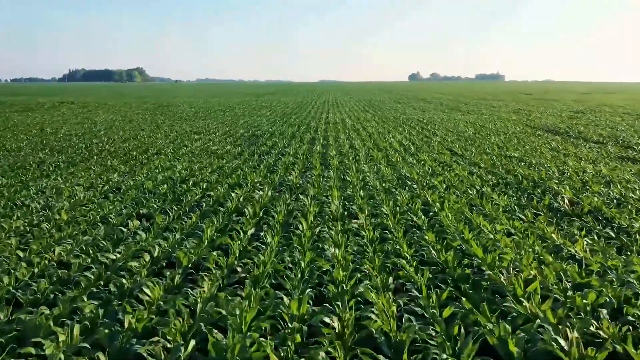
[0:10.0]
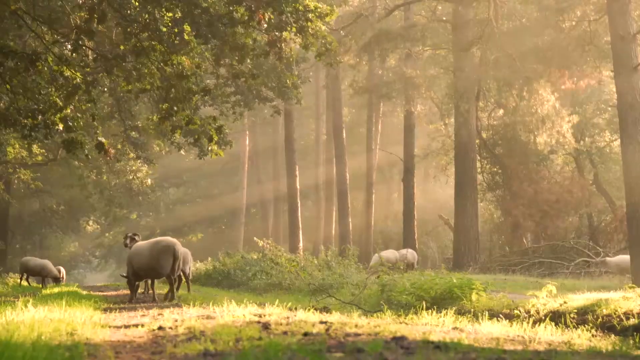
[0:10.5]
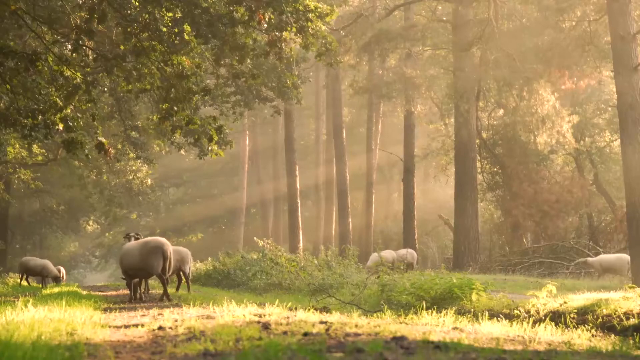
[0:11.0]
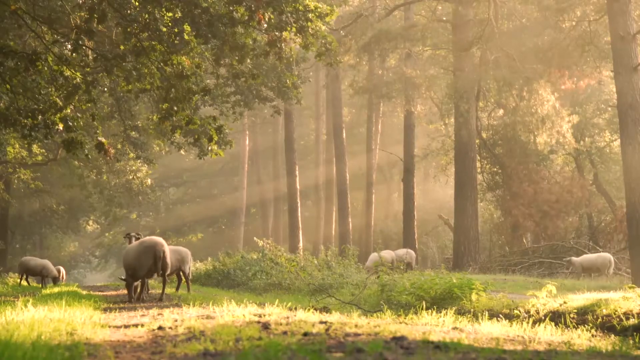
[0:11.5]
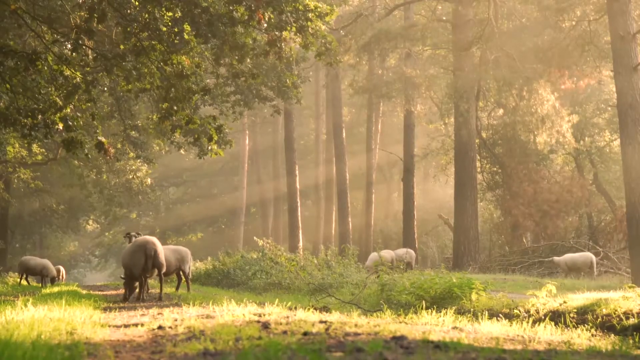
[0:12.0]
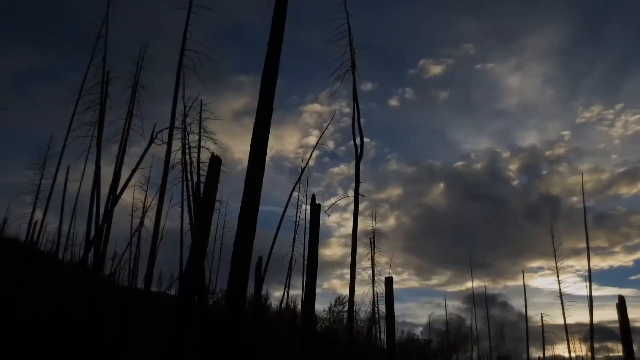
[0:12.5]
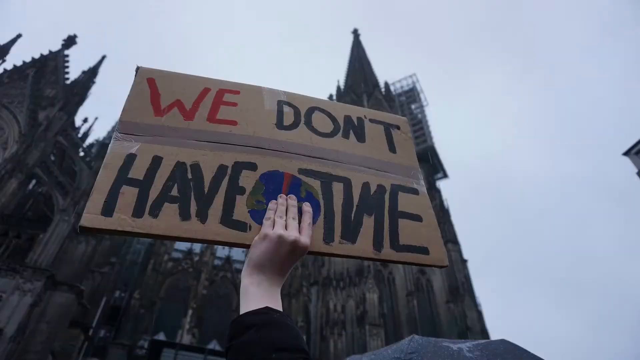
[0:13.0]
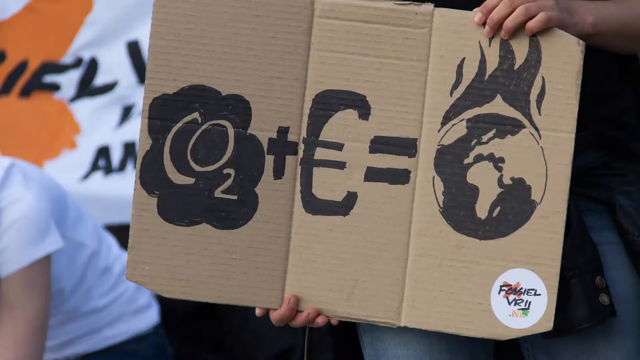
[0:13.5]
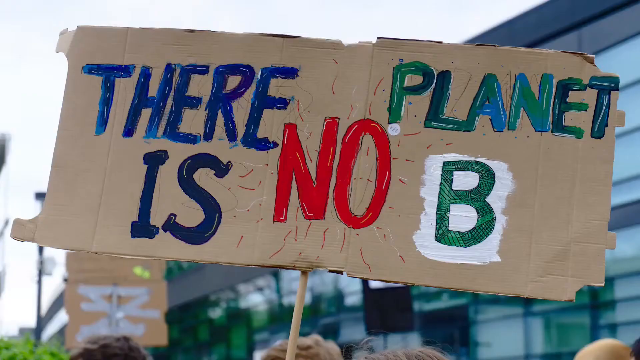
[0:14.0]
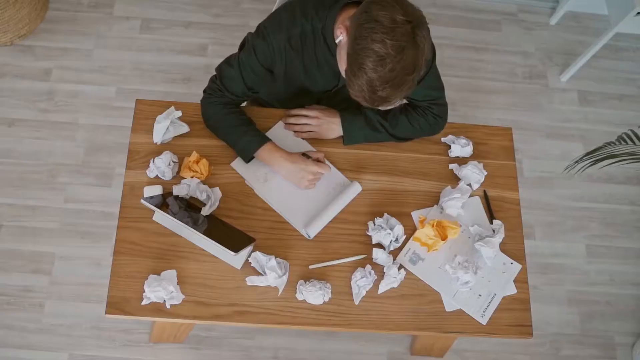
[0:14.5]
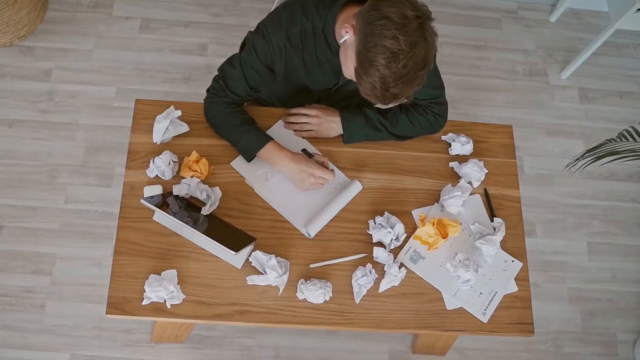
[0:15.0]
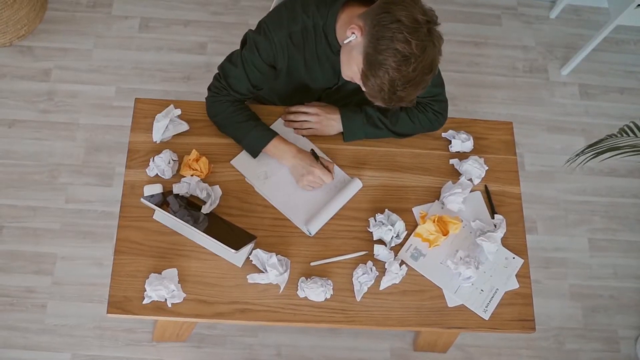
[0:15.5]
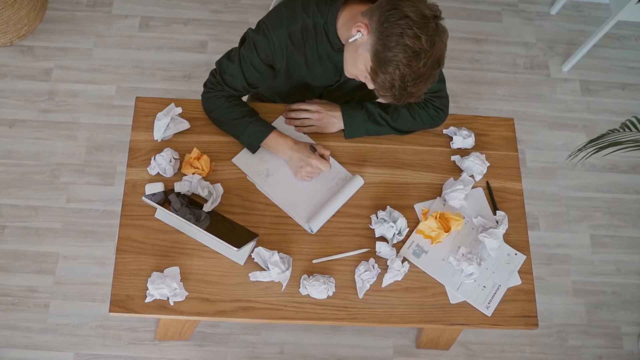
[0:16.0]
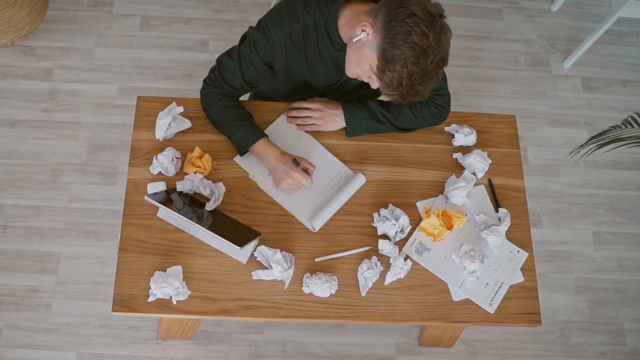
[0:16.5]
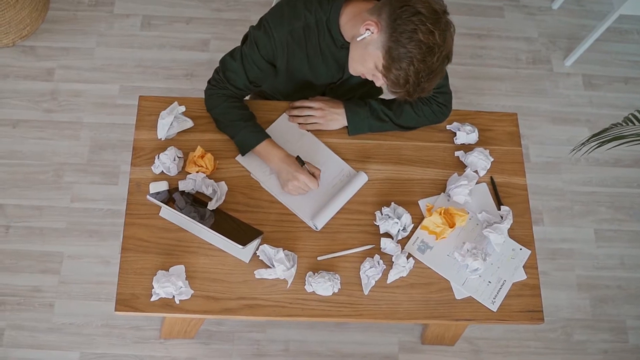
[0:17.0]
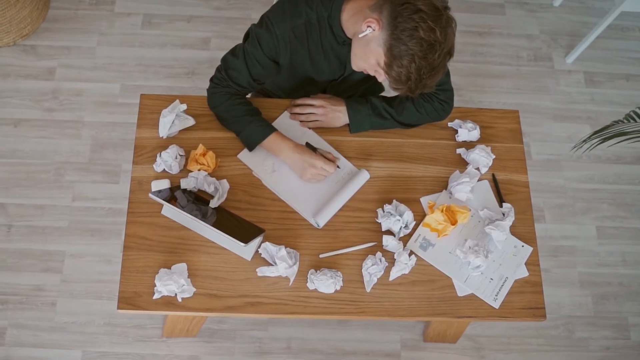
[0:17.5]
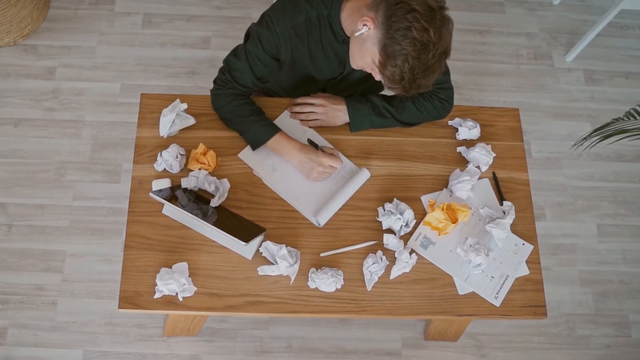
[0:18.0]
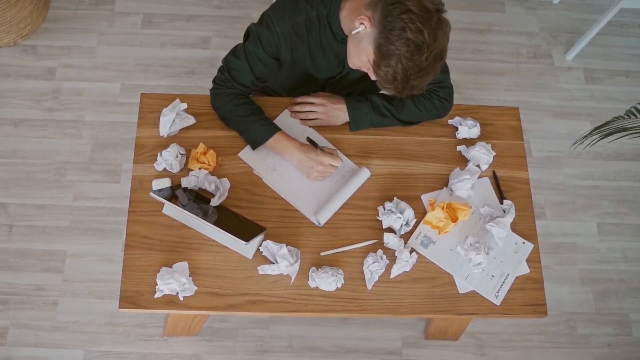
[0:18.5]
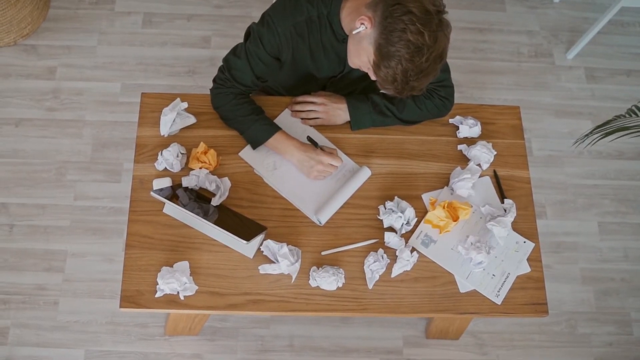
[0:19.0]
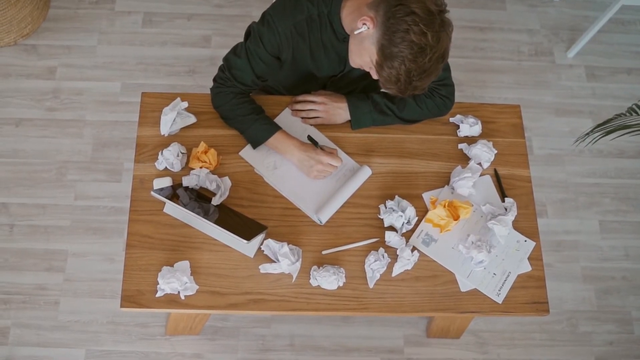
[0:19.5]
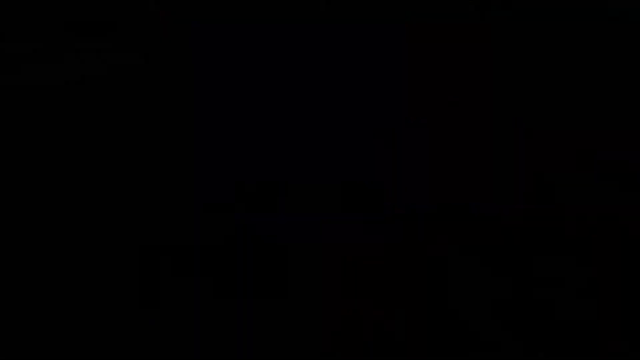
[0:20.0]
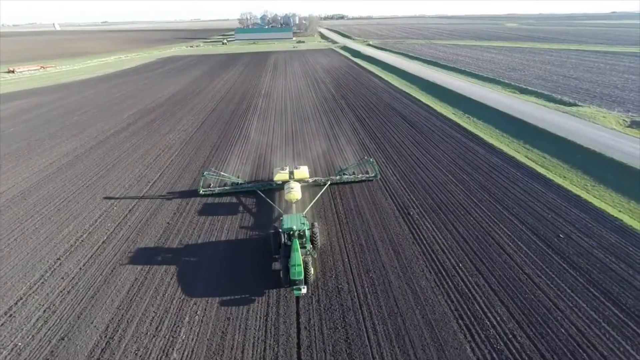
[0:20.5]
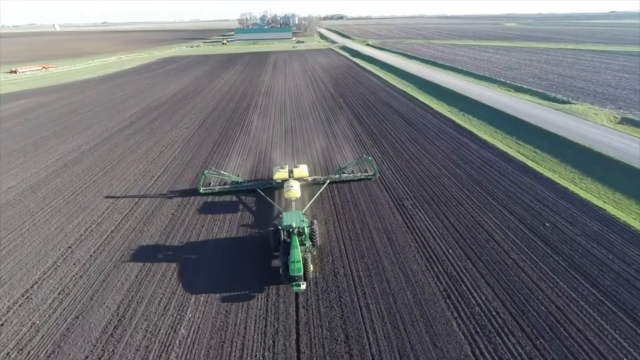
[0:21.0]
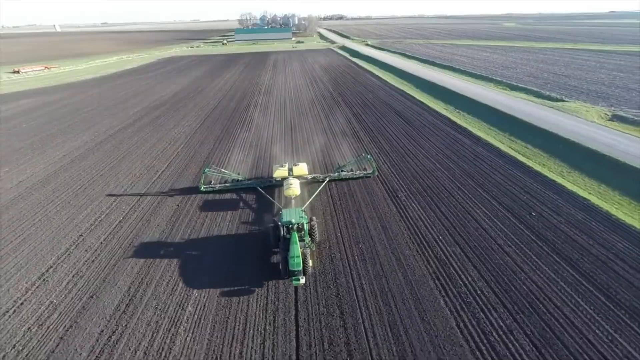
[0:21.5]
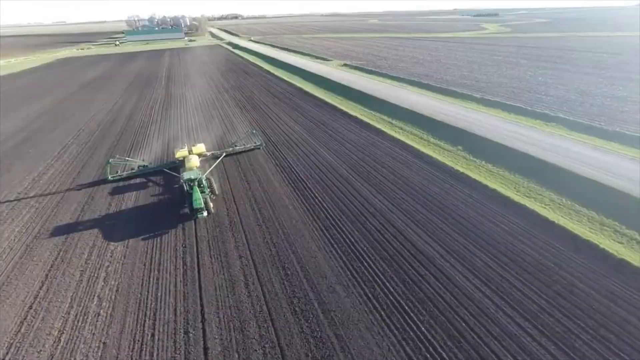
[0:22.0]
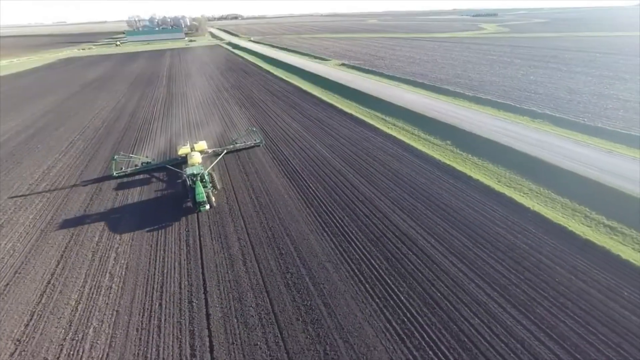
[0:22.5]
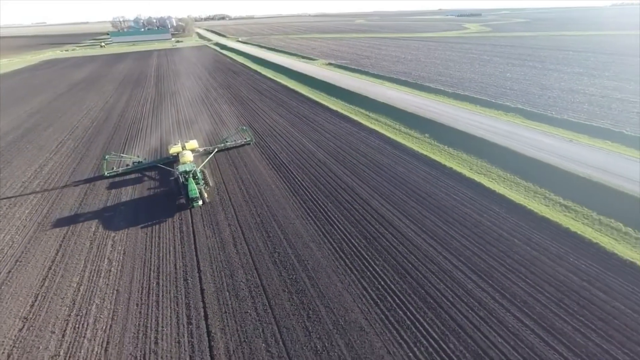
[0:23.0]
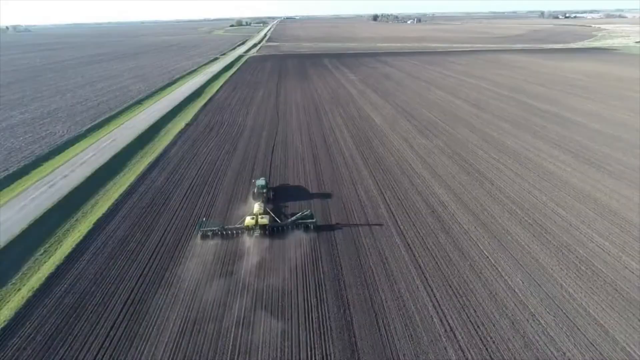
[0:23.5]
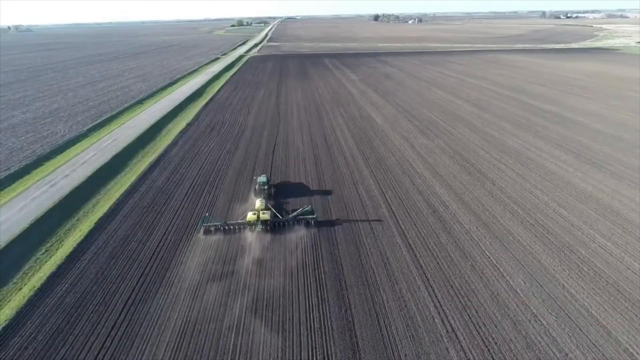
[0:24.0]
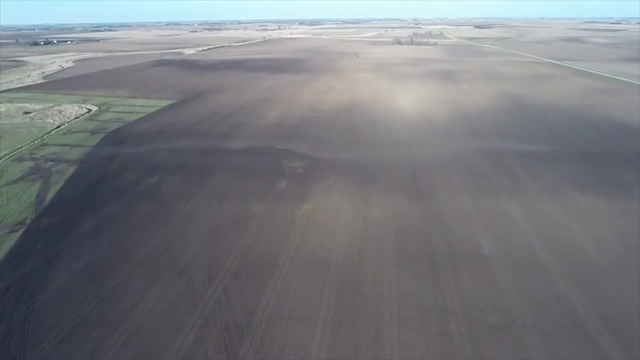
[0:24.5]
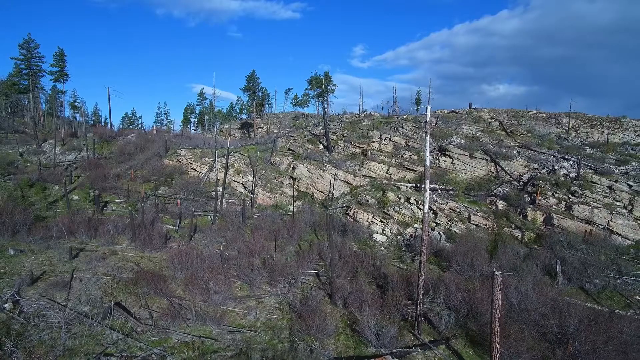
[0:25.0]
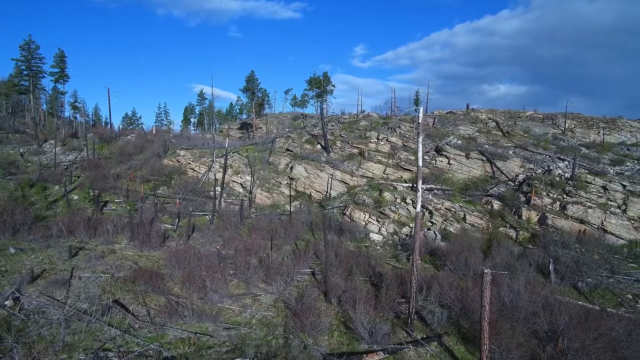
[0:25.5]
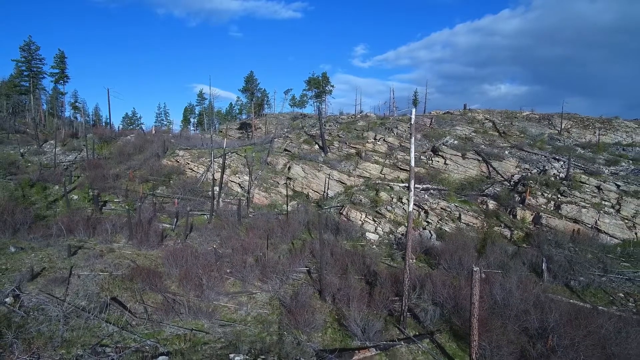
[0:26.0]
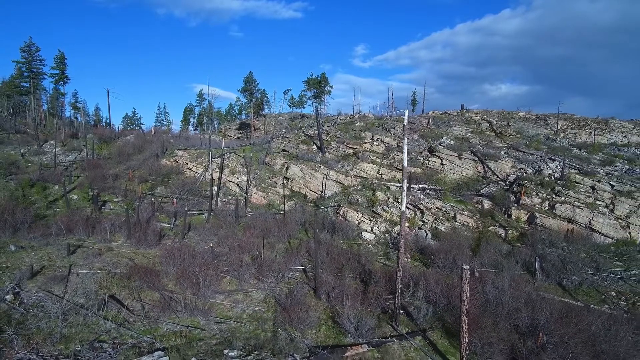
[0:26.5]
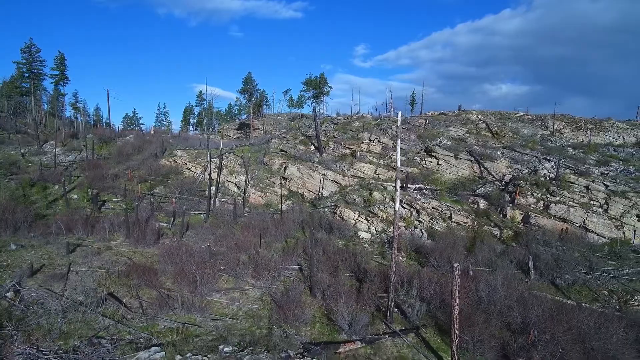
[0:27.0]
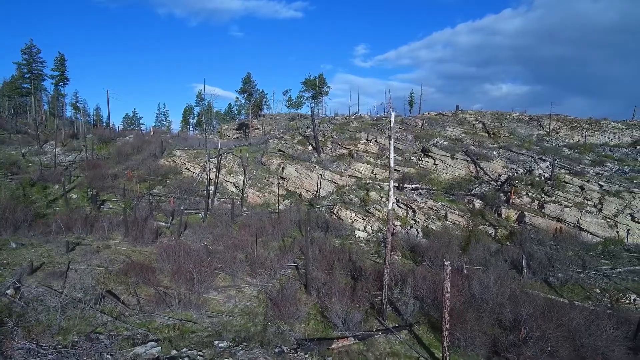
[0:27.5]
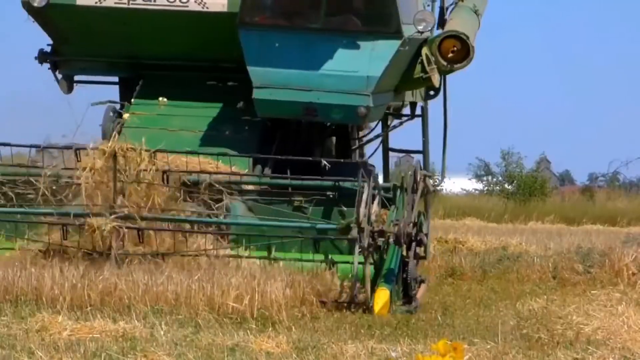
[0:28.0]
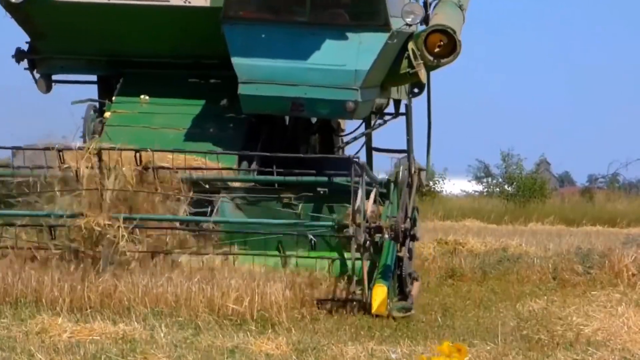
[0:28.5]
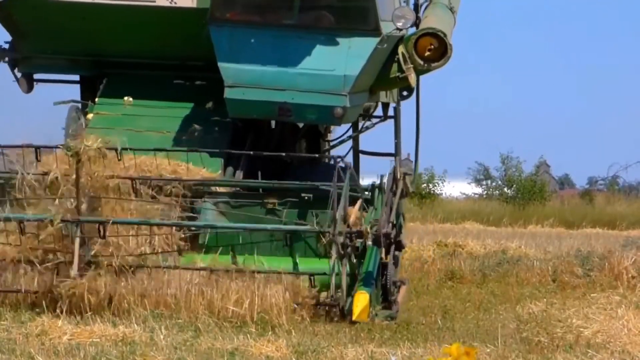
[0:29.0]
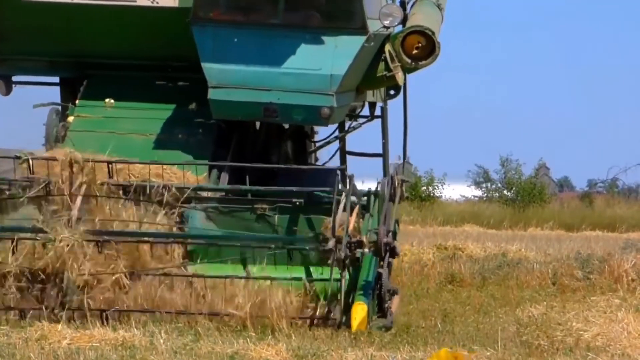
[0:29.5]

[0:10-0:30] A cinematic shot shows a forest with various white animals that look to be sheep grazing on the green grass ground, while sun rays shine from right to left through the trees. The video cuts to quick, short images of picket signs that appear to be protesting for planet and nature conservation; one sign, made of cardboard and painted, says "there is no planet B" in colorful letters. Next, a man works at a brown wooden desk. He wears a long-sleeve black shirt and has a white AirPod in his ear, and he tilts his head while using a pen or pencil to write on a rectangular white piece of paper. Crumpled balls of paper are along the desk, and what looks to be a black iPad-like device is on the left side of the frame. The video cuts to a green tractor plowing through a large, black field or farmland surrounded by many other areas of farmland; the camera is up in the sky and shows different angles of the tractor going through the field. Another cut shows a forest that appears to be deforested, either by fire or some type of weather event. At the very end, a short shot shows a farm tractor churning through tan grass or hay, spinning it through its mechanism.